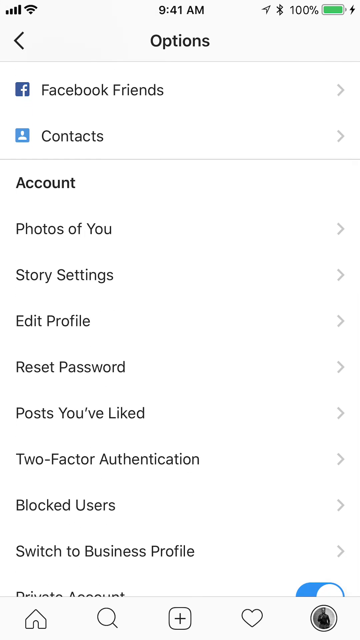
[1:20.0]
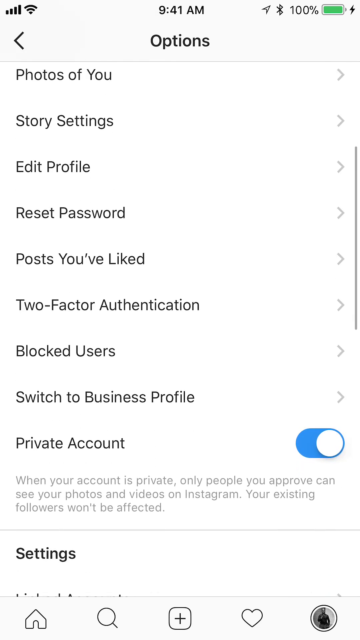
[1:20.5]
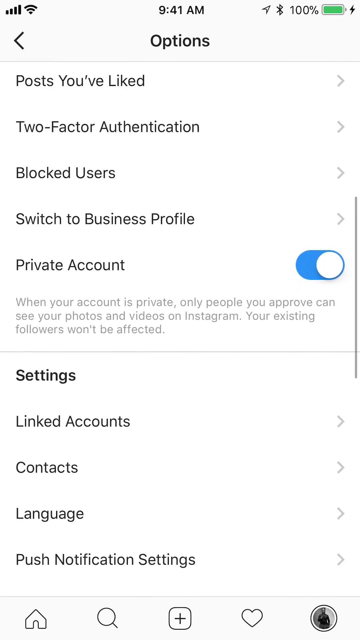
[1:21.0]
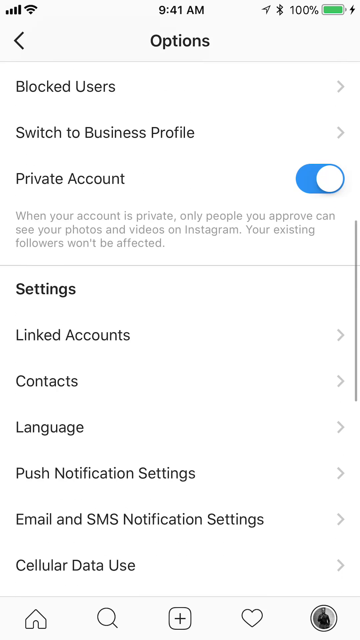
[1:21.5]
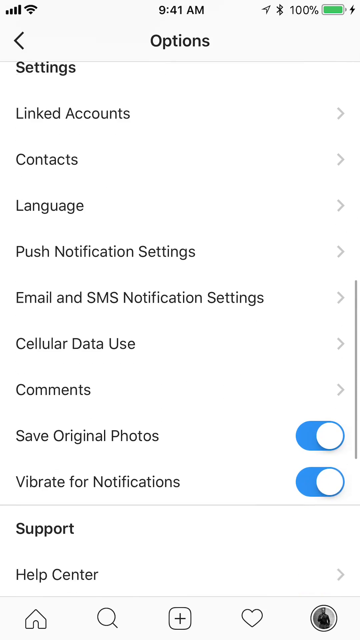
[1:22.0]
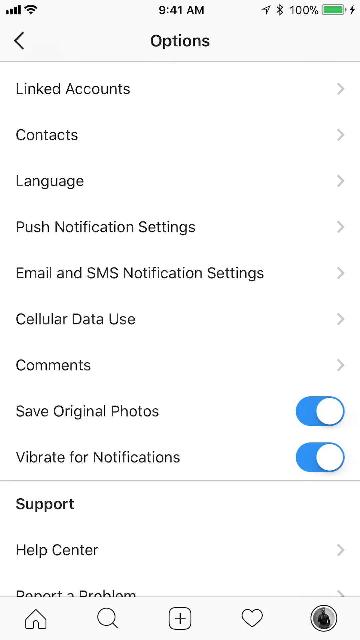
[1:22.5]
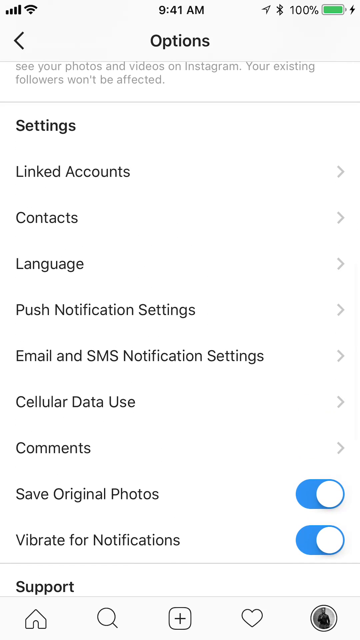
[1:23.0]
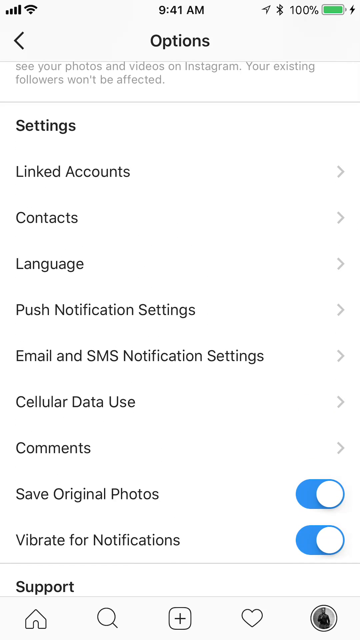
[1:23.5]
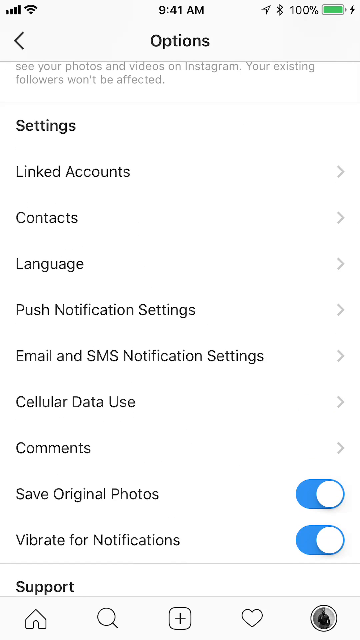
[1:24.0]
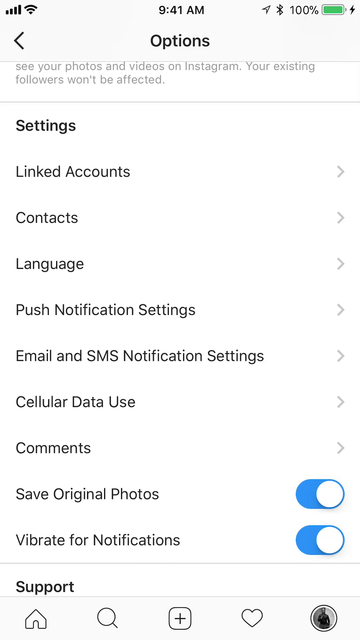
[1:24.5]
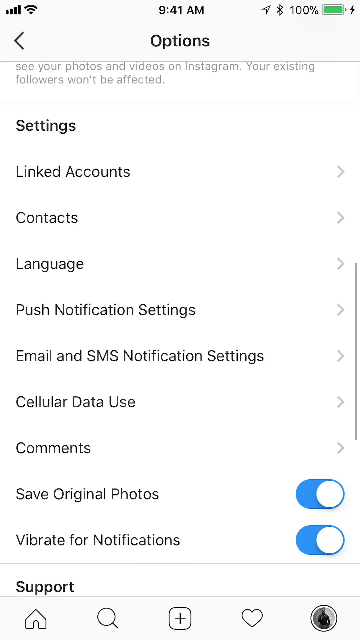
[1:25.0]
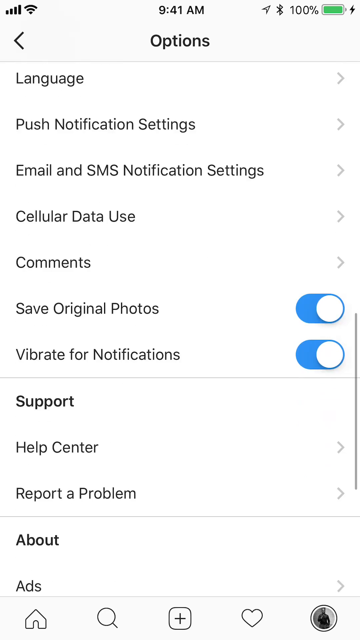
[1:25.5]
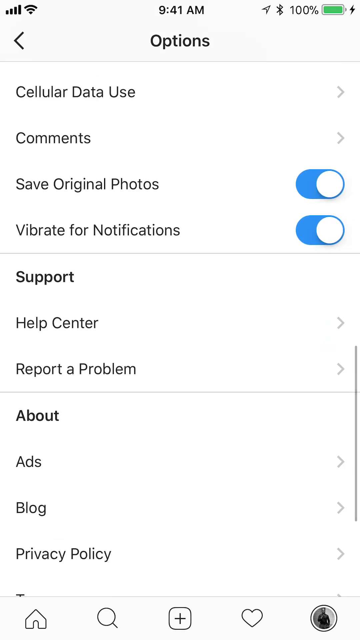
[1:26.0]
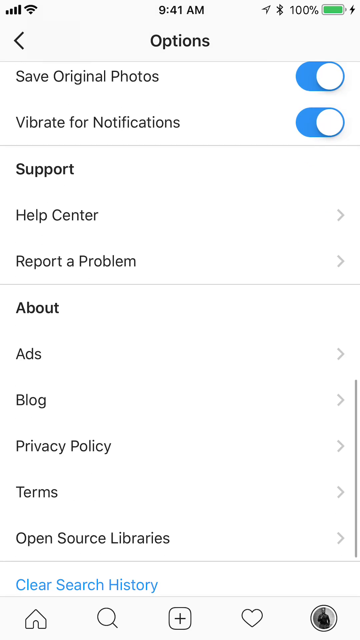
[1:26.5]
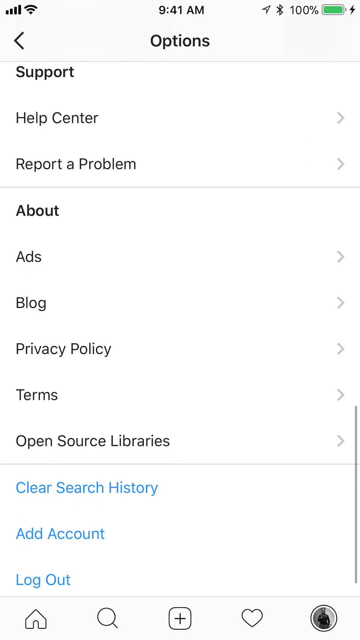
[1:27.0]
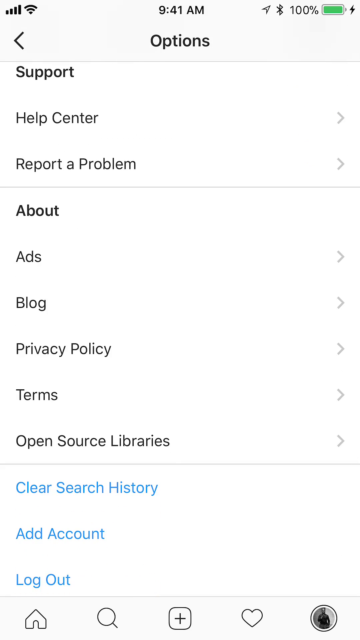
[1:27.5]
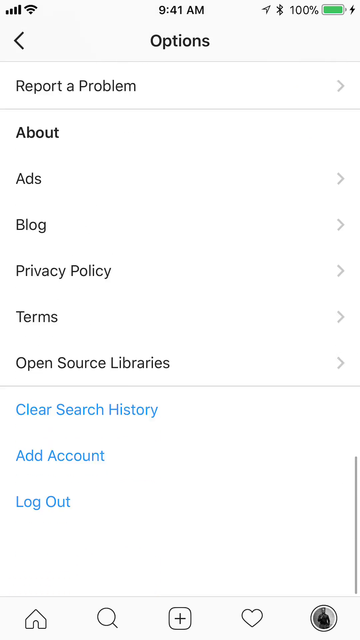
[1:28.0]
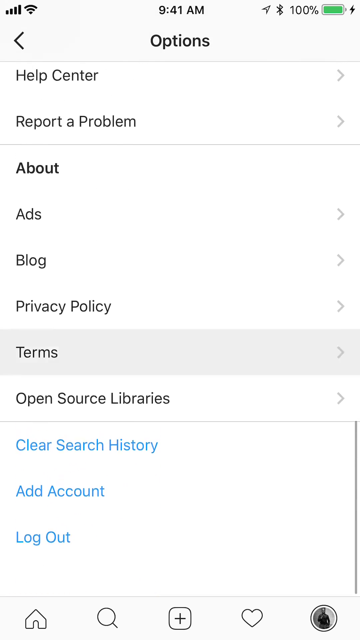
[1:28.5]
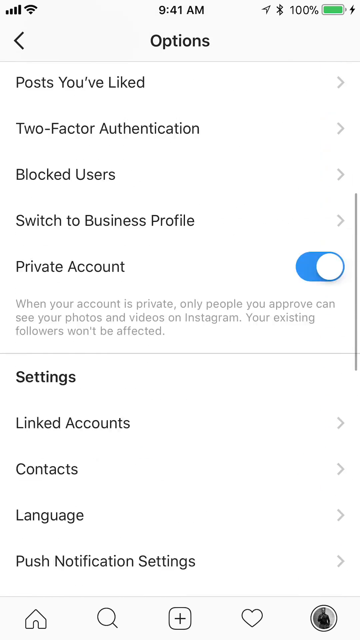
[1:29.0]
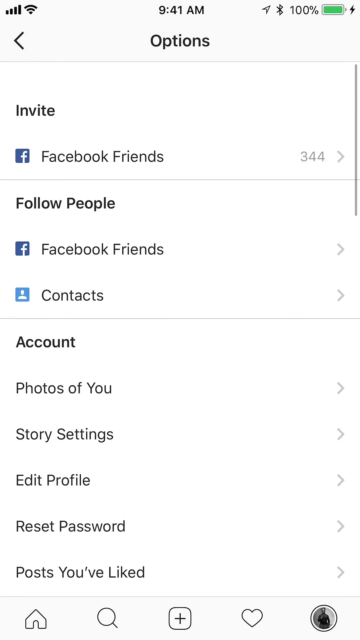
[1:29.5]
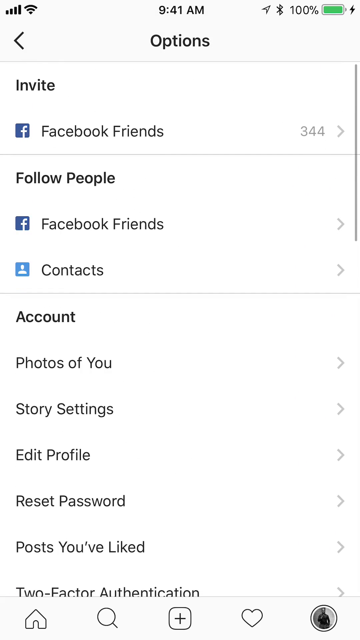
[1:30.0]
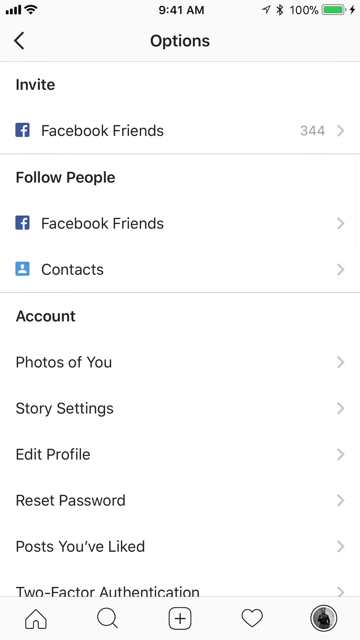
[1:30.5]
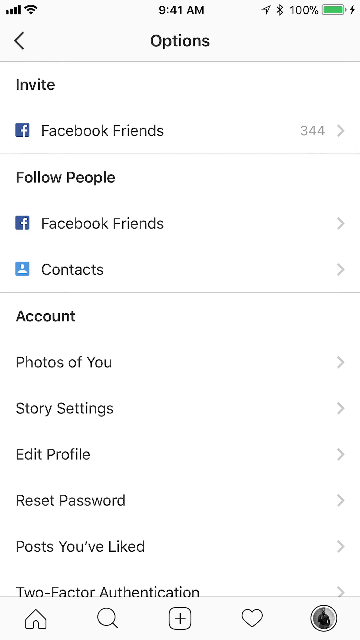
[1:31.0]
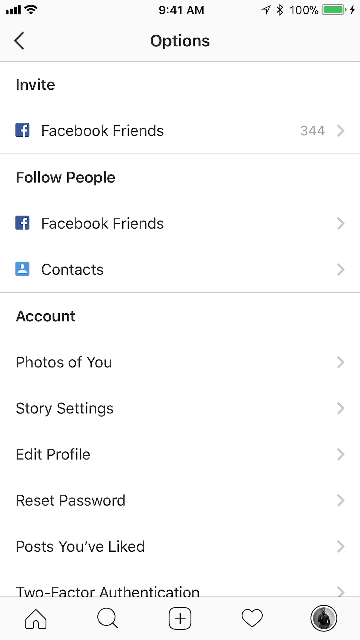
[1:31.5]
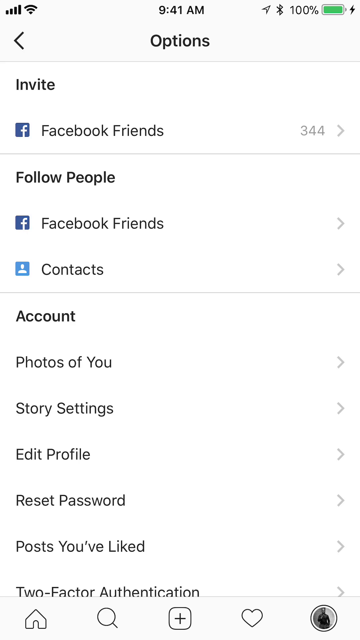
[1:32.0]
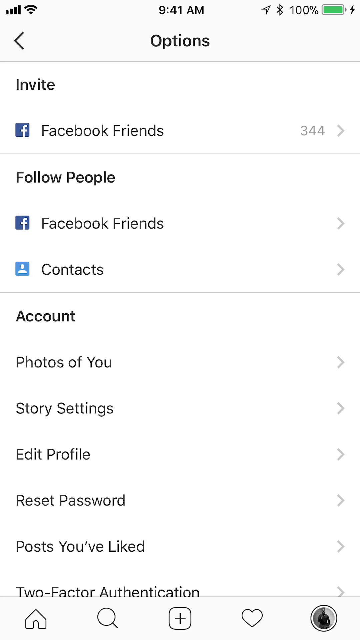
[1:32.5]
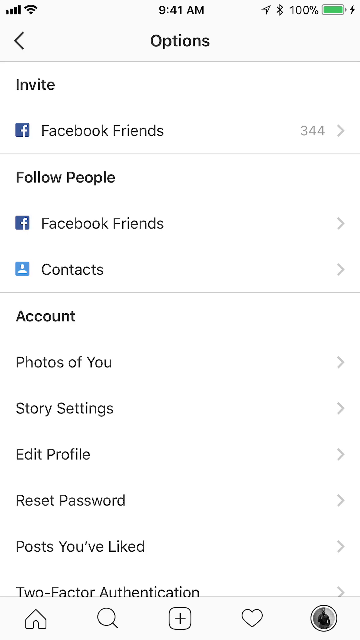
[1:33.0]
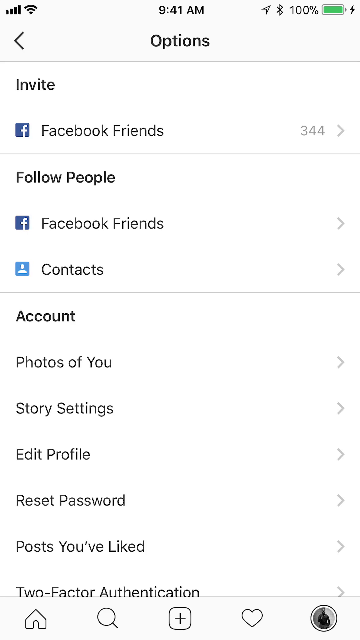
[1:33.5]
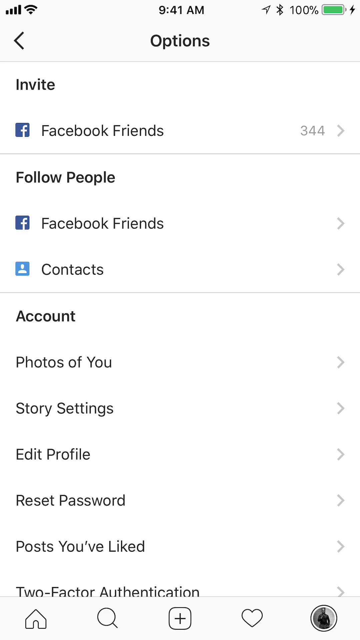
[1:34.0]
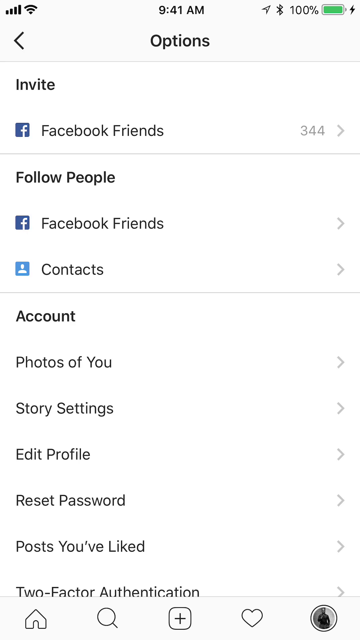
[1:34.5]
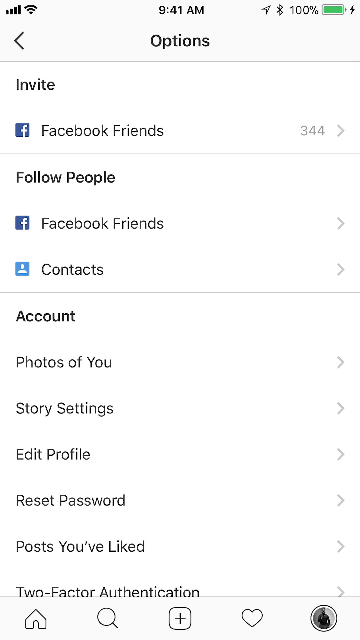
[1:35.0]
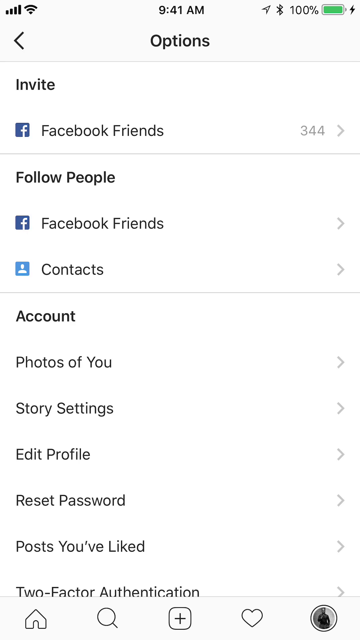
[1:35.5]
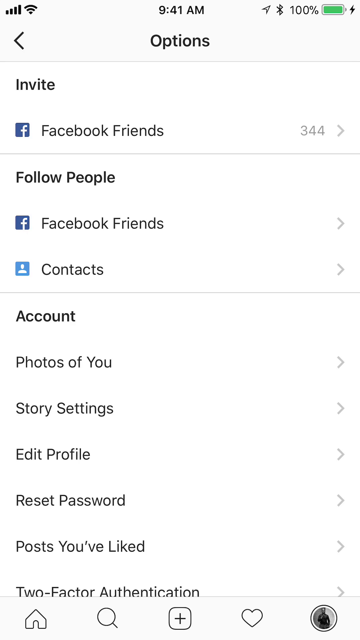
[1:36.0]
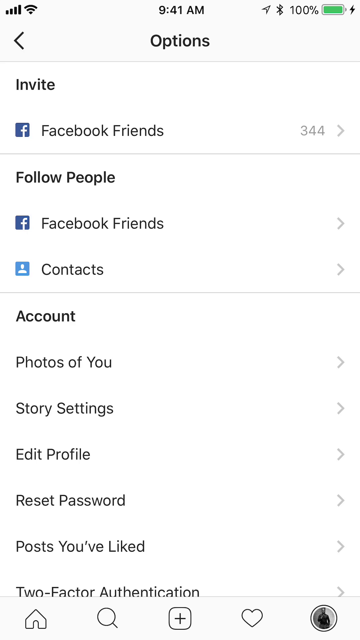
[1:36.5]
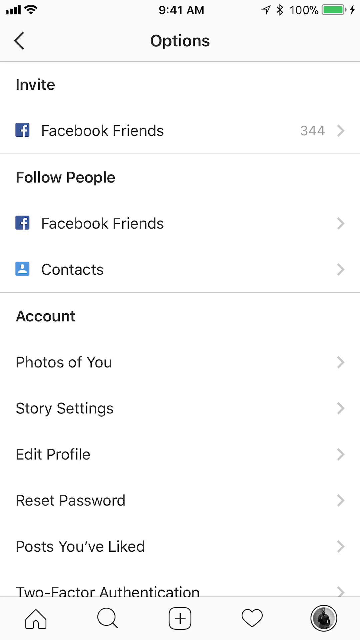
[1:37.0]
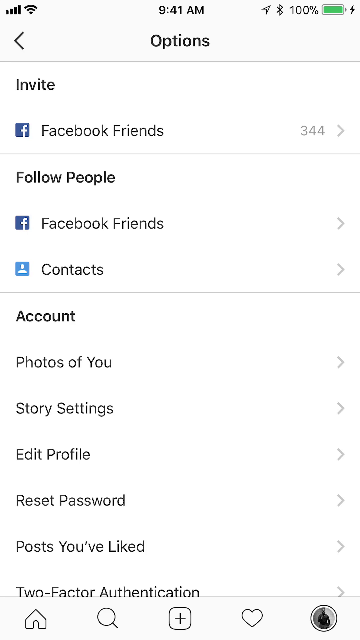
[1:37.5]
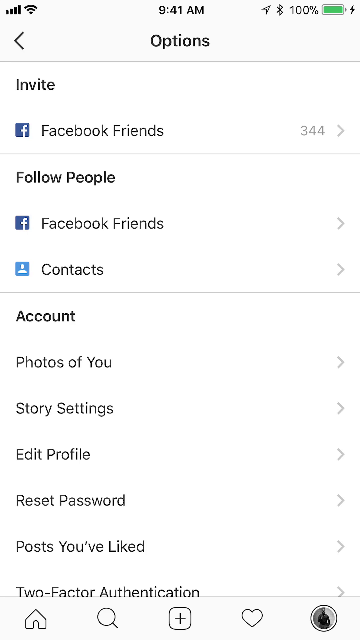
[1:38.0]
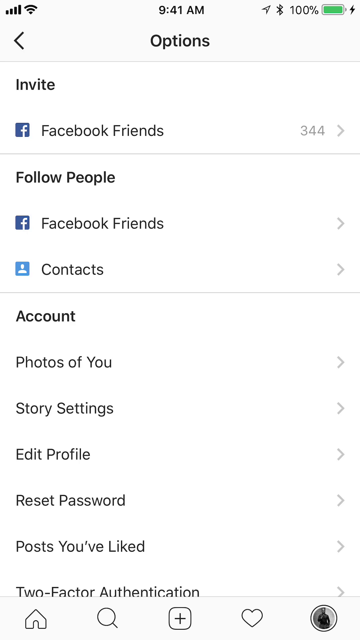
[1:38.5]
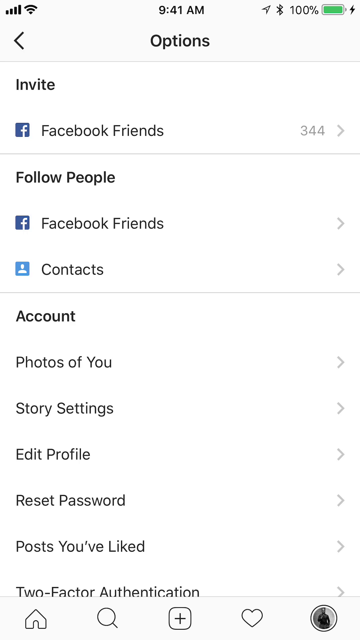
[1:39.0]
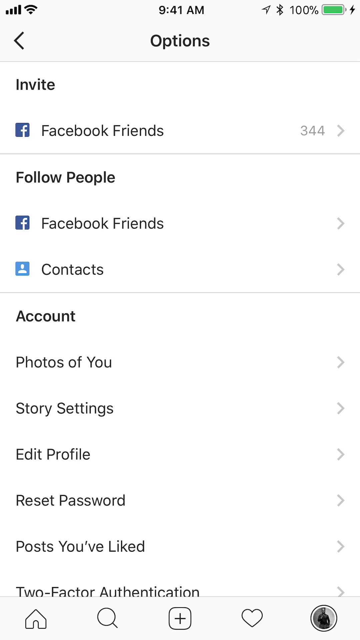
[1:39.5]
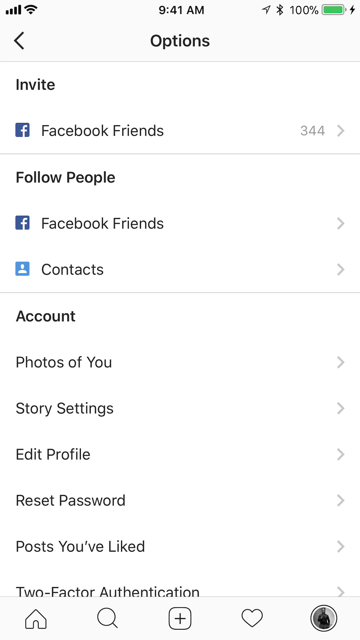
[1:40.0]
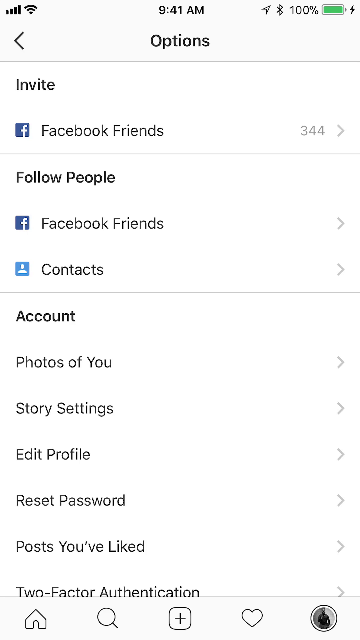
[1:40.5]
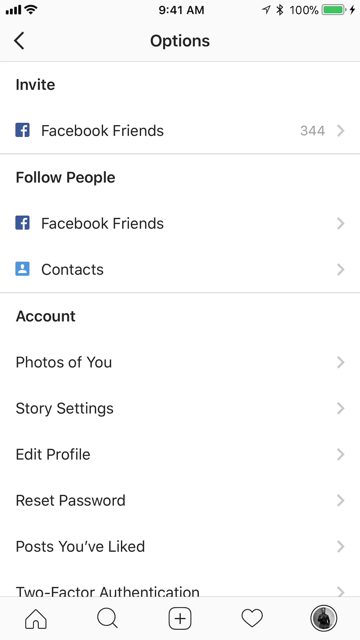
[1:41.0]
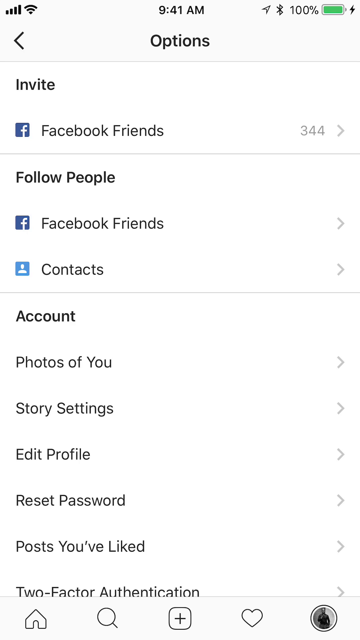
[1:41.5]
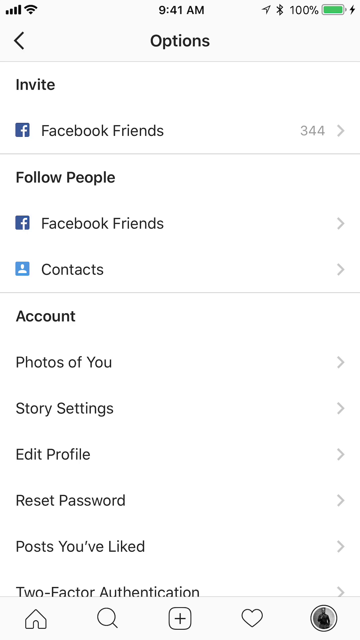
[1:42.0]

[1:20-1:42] The video is on the Instagram options page, with "Options" at the top. He scrolls down to the account settings, which include photos of you, story settings, edit profile, reset password, posts you've liked, two-factor authentication, blocked users, and switch to business profile, each with an arrow on the right to expand it. Scrolling further reveals more settings, including blocked users, switch to business profile, and a private account toggle button. He scrolls down more to a section with the header "Settings", listing linked accounts, contacts, language, push notification settings, email and SMS notification settings, cellular data, use comments, saved version of photos, and alert for notifications. He scrolls down a little more, revealing a "Support" header with Help Center underneath, then scrolls slightly back up to the Settings header. He scrolls back down, revealing all the support settings, including Help Center and report a problem, and then the about settings, which include ads, blog, privacy policy, terms, and open source libraries. He scrolls to the very bottom, where there are options to clear search history, add account, or log out, and then scrolls all the way back to the top.